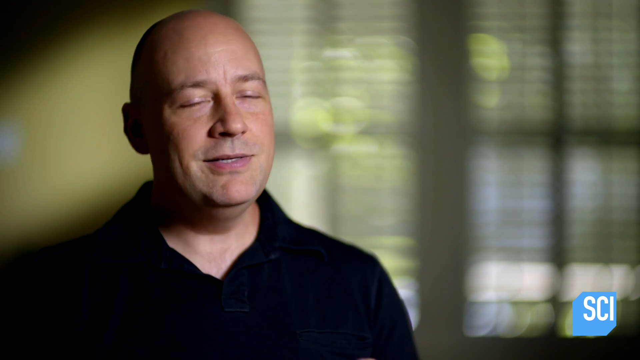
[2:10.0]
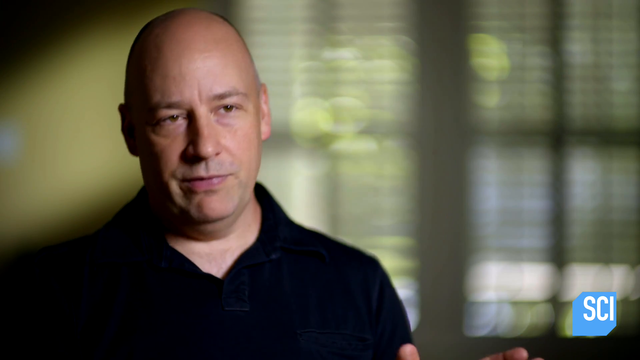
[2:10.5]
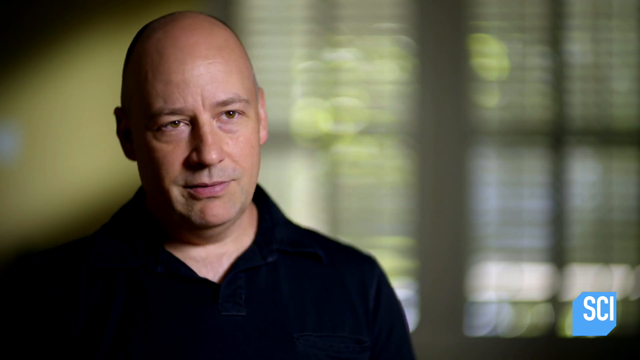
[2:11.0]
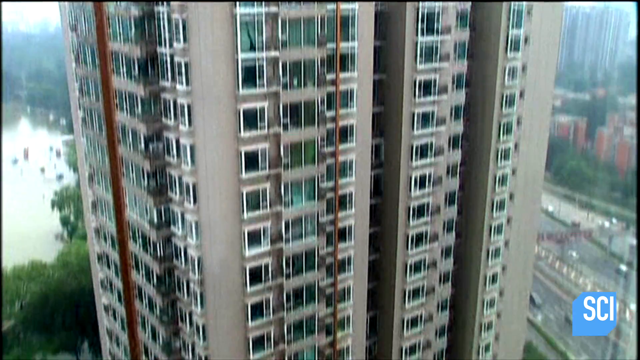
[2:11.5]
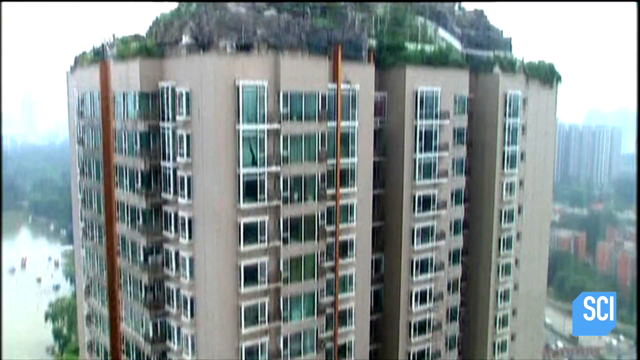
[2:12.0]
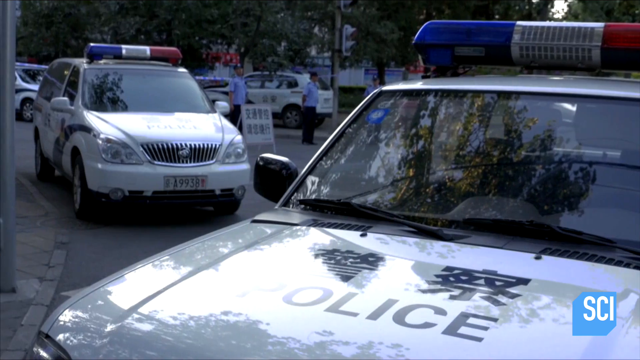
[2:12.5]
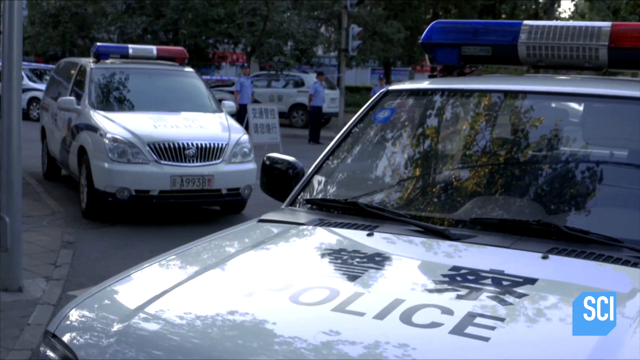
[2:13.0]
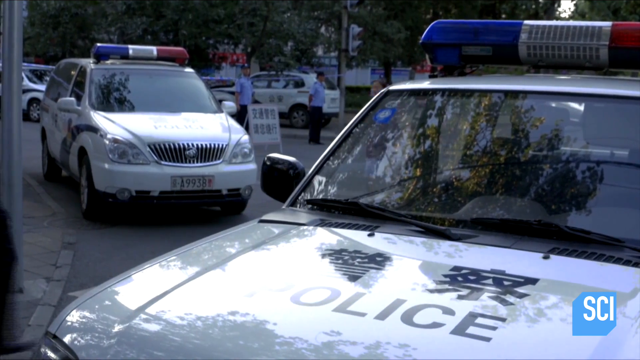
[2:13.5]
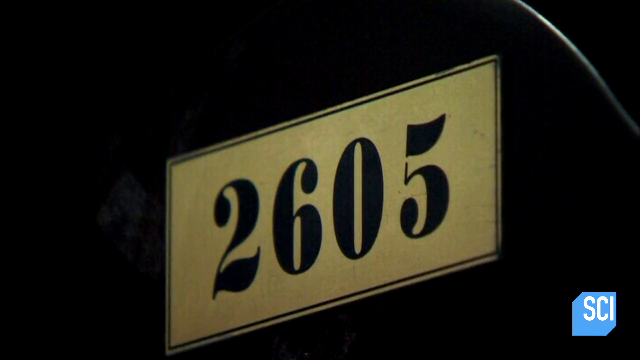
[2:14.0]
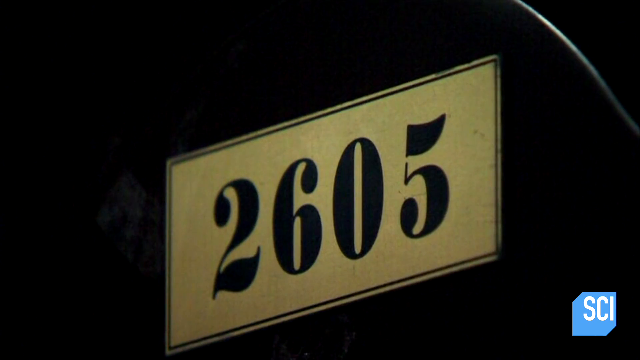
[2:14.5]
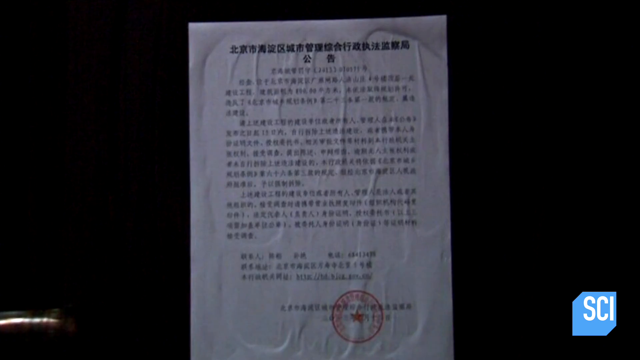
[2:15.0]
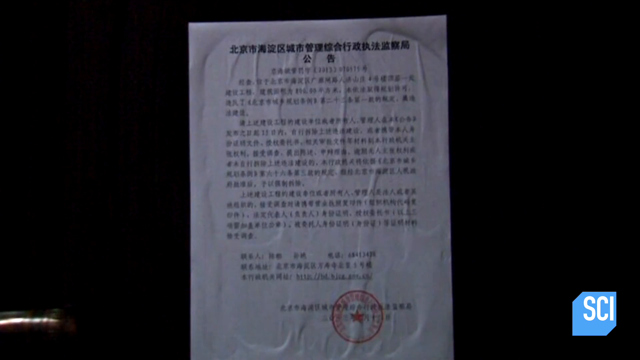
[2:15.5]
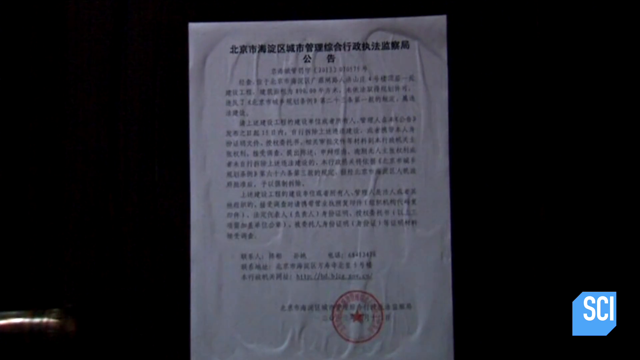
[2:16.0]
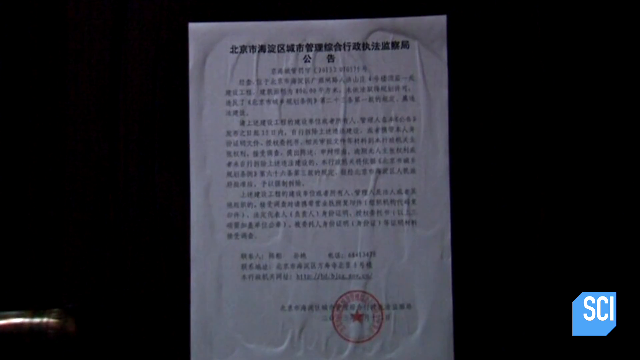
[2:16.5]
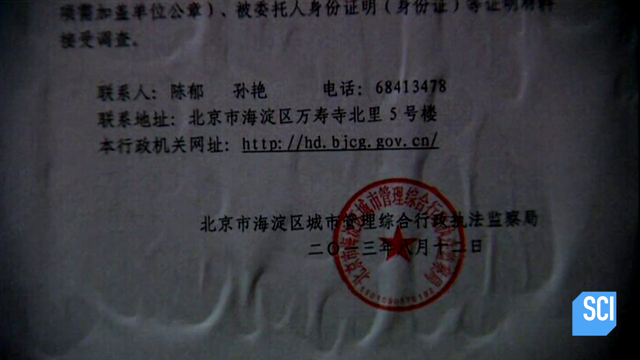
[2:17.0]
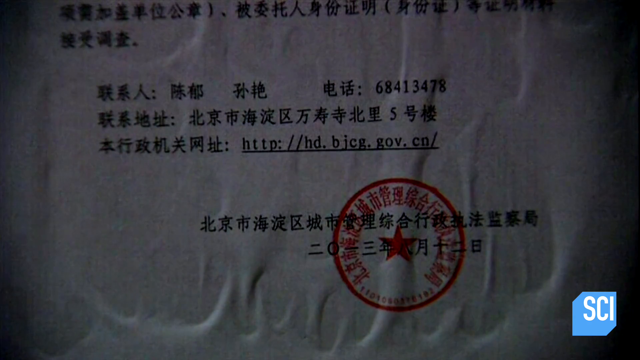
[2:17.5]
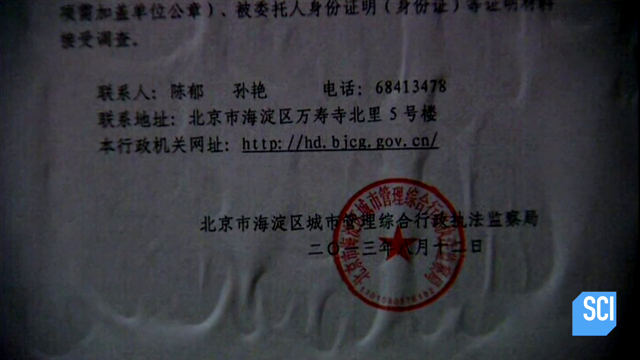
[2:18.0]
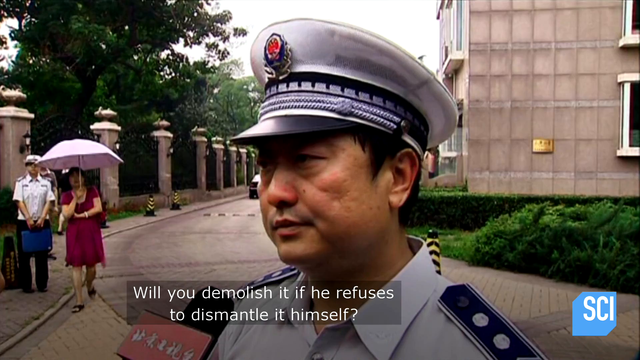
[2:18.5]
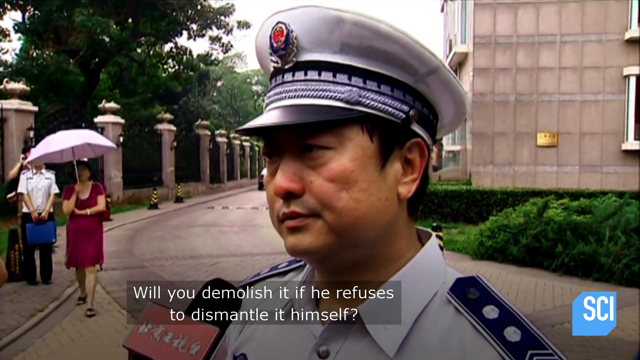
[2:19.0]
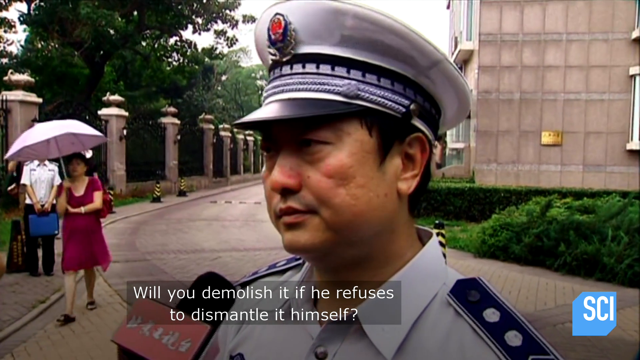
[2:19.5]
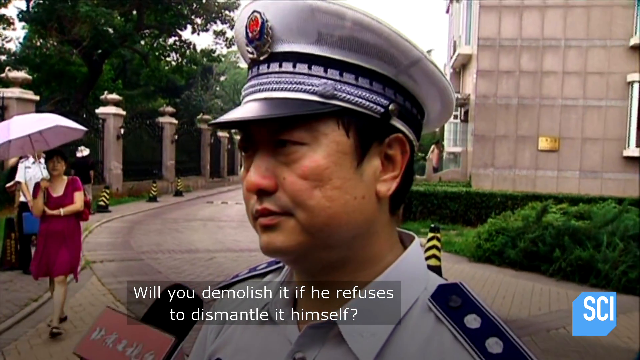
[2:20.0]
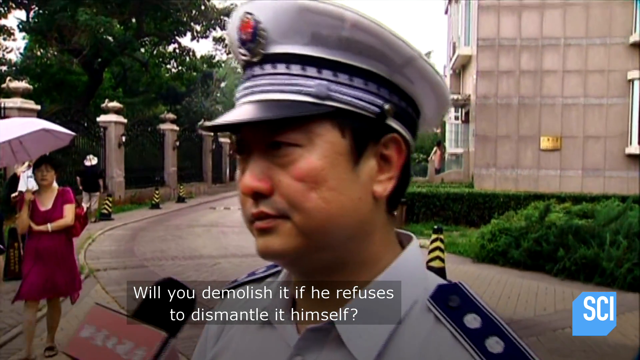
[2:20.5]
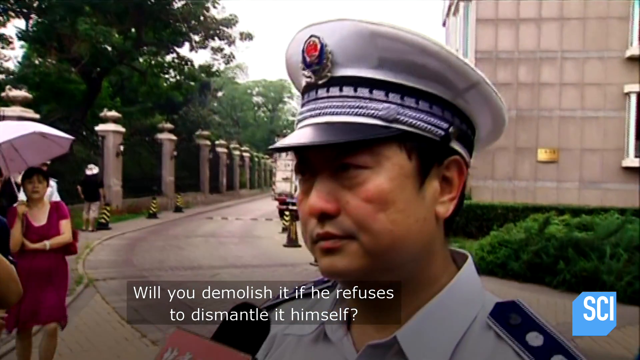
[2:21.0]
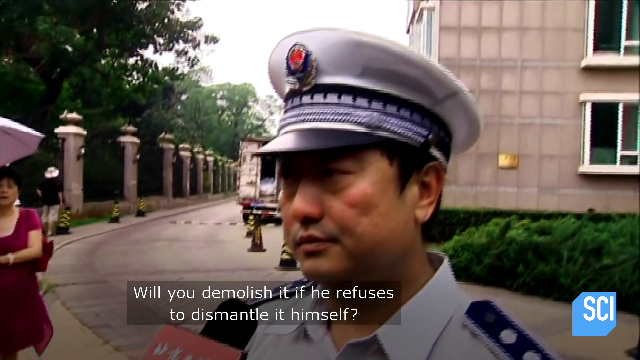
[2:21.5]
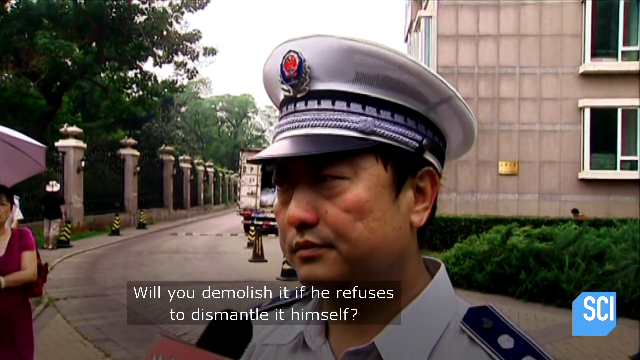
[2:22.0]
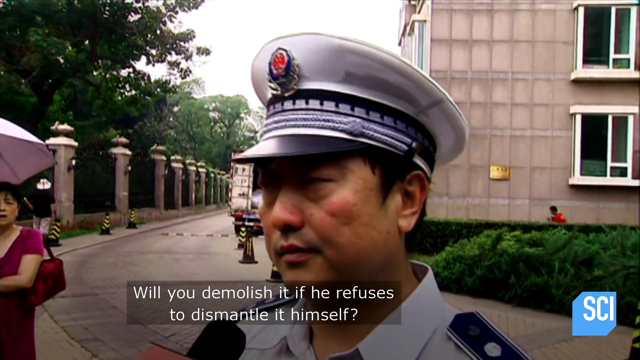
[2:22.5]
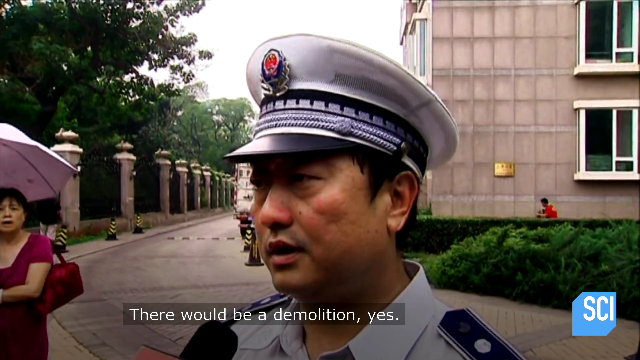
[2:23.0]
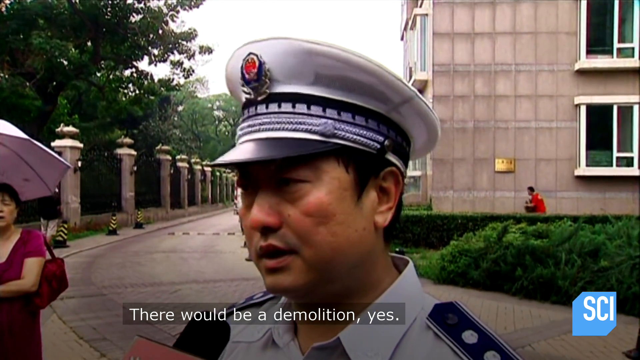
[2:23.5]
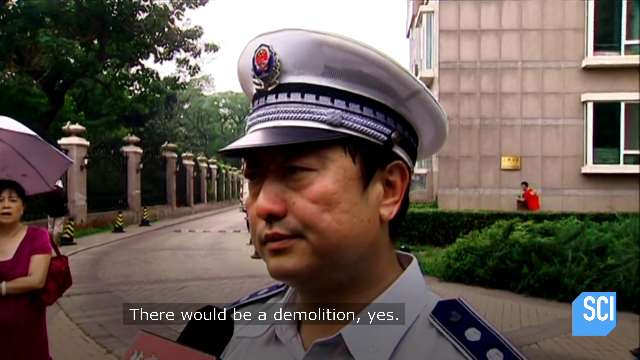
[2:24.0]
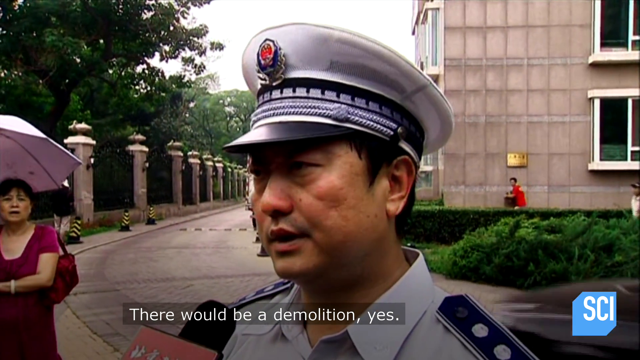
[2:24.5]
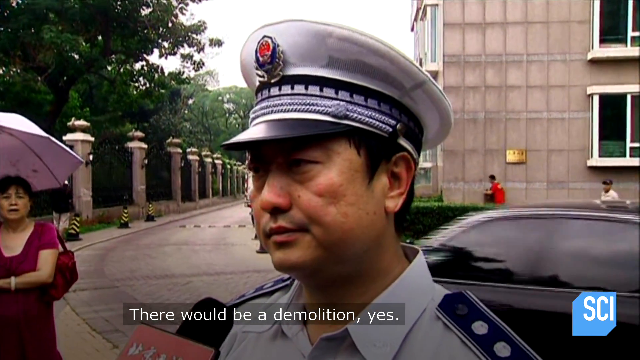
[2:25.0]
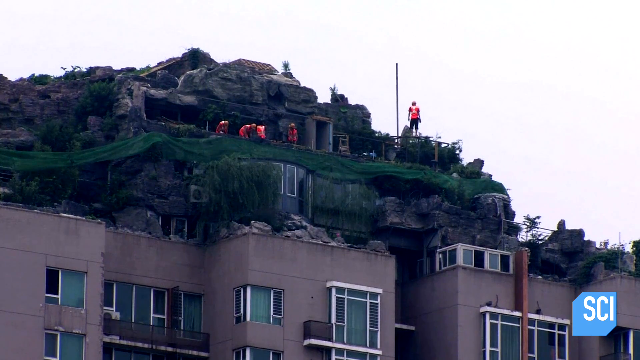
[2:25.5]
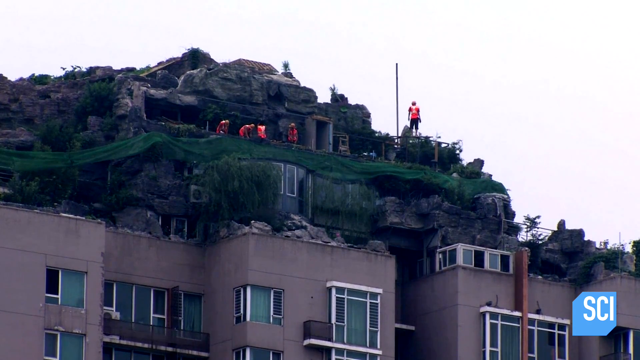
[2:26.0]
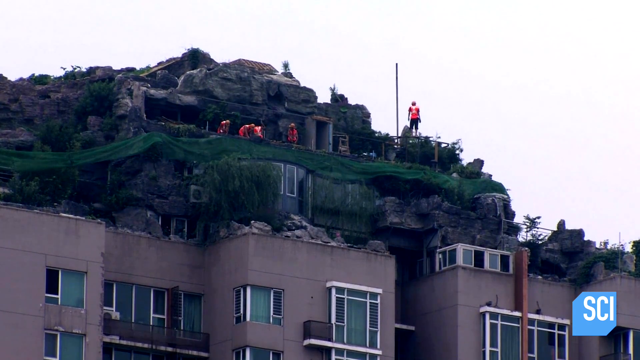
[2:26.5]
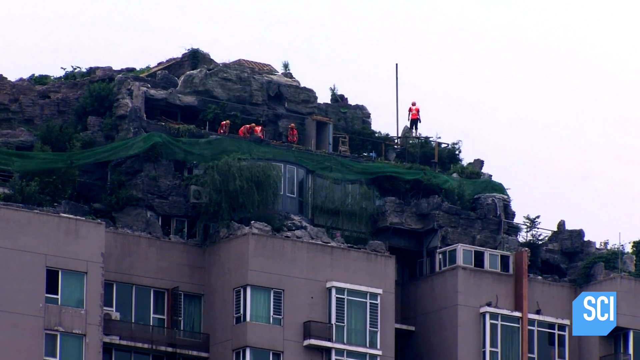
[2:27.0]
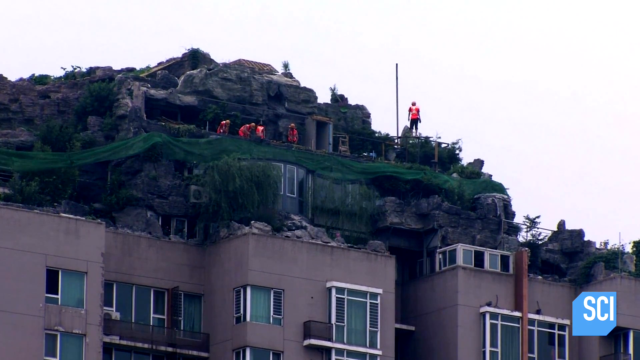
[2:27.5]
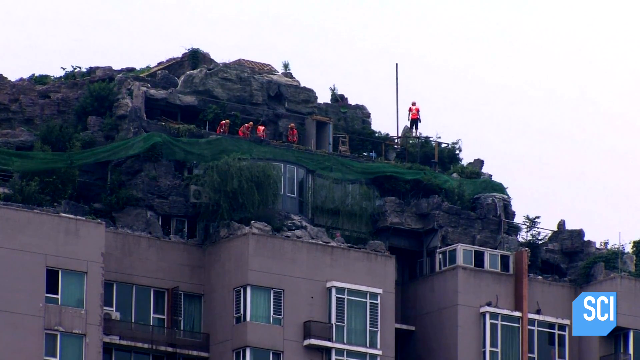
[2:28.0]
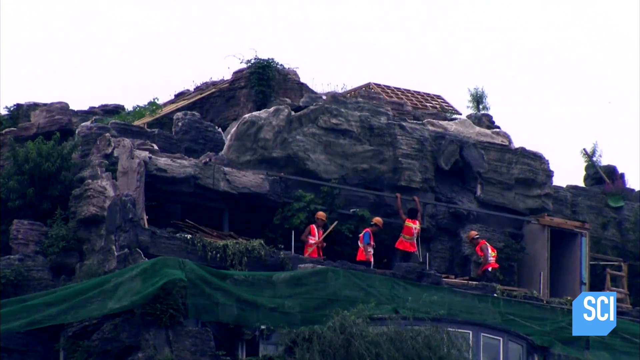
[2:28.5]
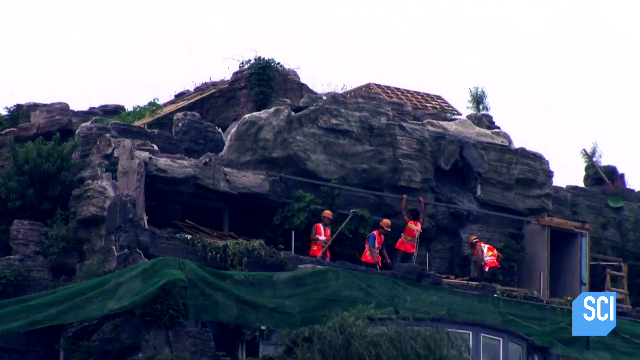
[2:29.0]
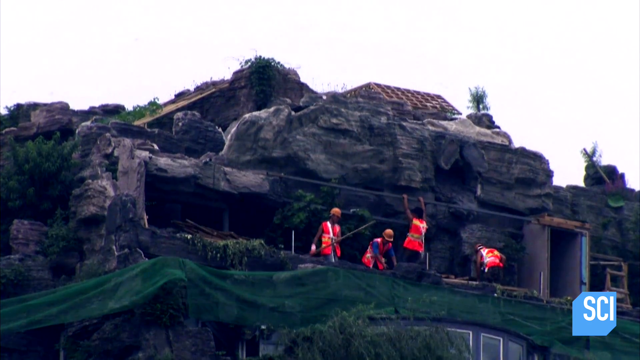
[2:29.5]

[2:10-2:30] Mike Capps, the technology theorist, is speaking. At some point it looks like someone interviews a police officer; several police cars are parked outside. The number 2605 is visible, possibly the address of the building, along with an order written in Chinese with an official red stamp. The officer is asked whether the structure will be dismantled if the person building it refuses, and he replies that yes, there will be a dismantling. From the drone, workers in orange vests are seen working on top of the apartment building, constructing things, with three or four levels already underway. Down below is a normal street scene with the police, and a woman walks by.